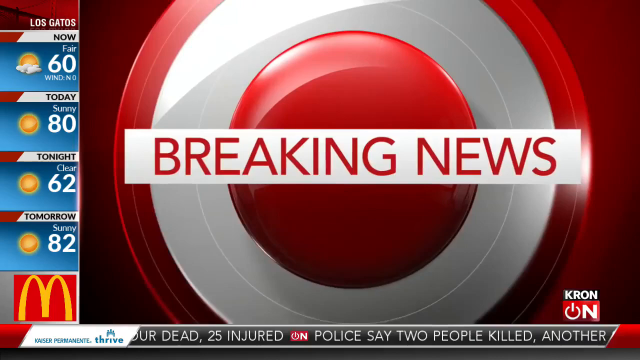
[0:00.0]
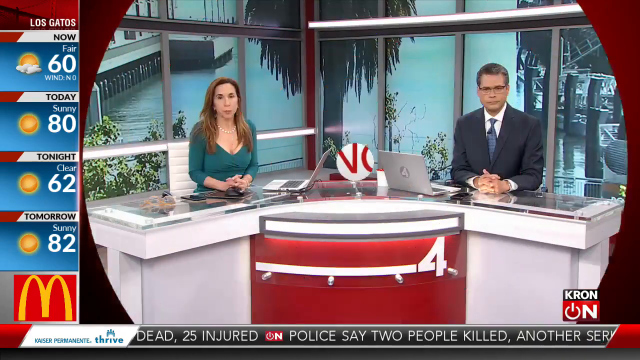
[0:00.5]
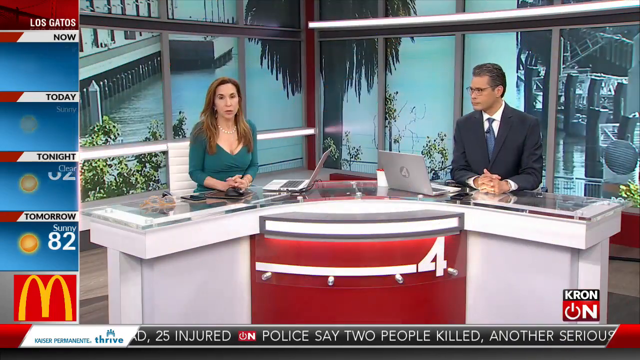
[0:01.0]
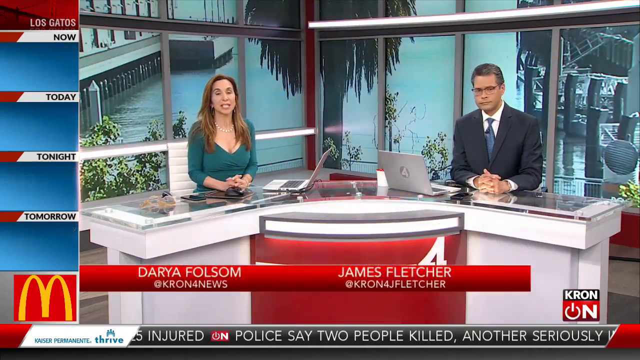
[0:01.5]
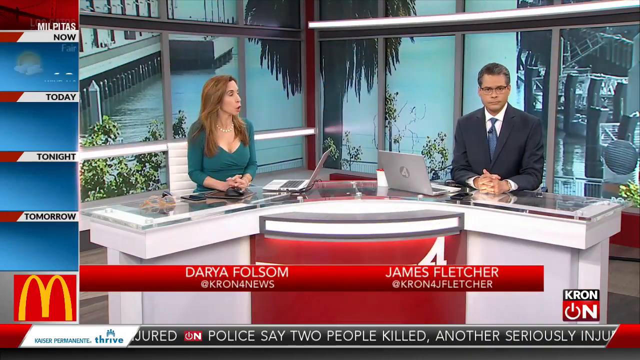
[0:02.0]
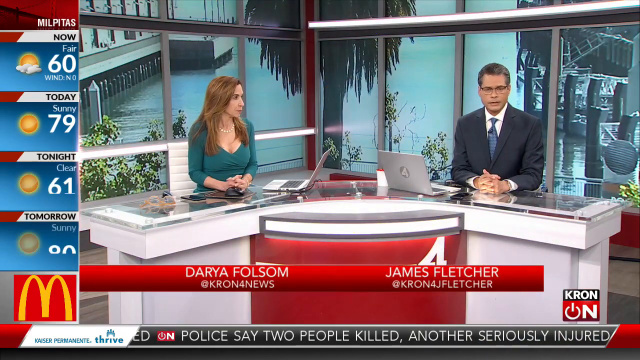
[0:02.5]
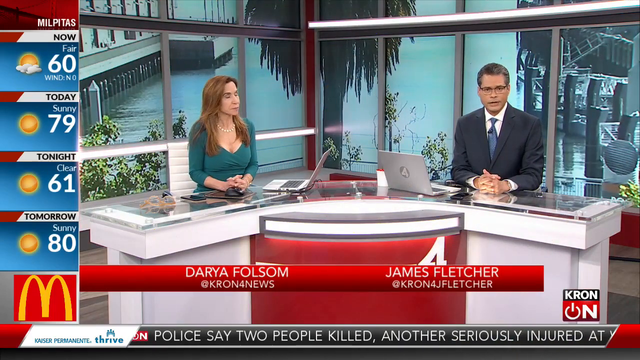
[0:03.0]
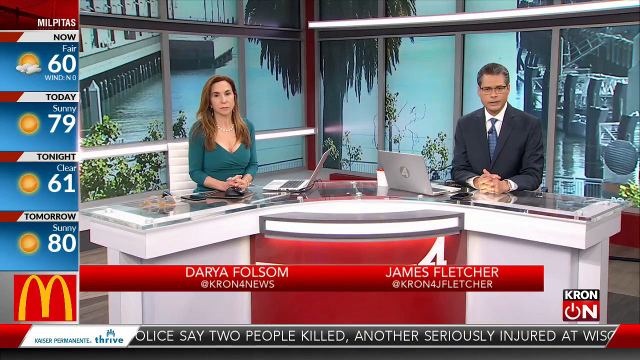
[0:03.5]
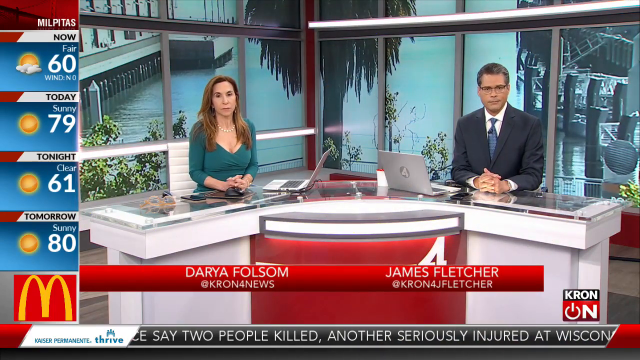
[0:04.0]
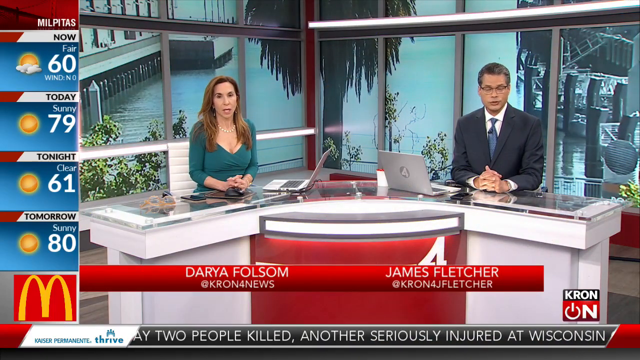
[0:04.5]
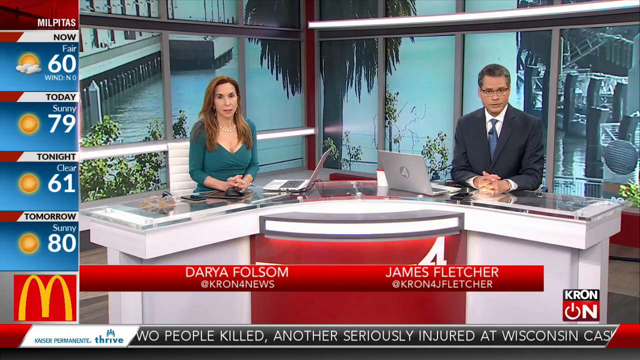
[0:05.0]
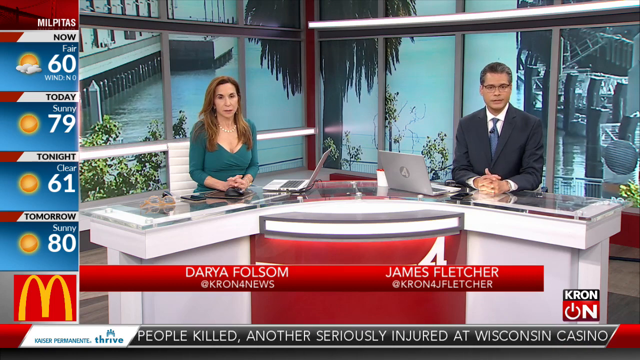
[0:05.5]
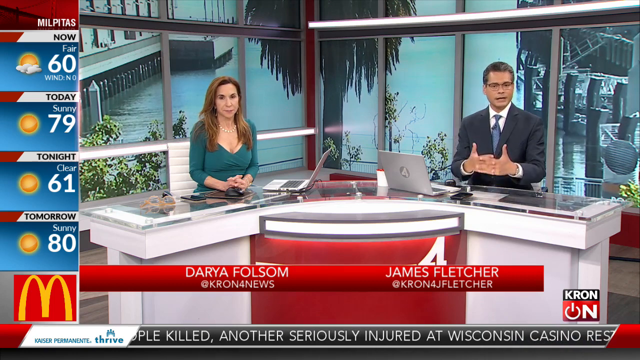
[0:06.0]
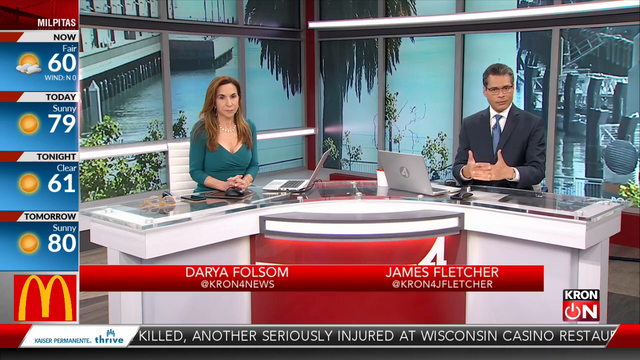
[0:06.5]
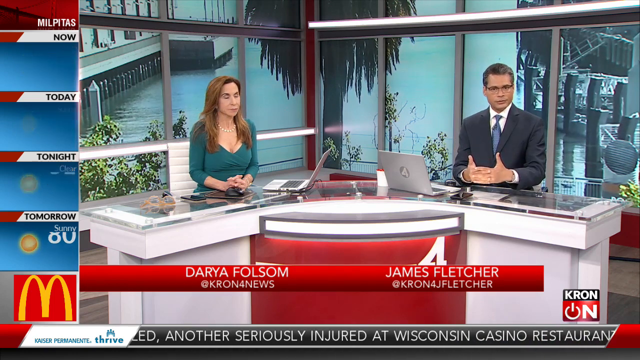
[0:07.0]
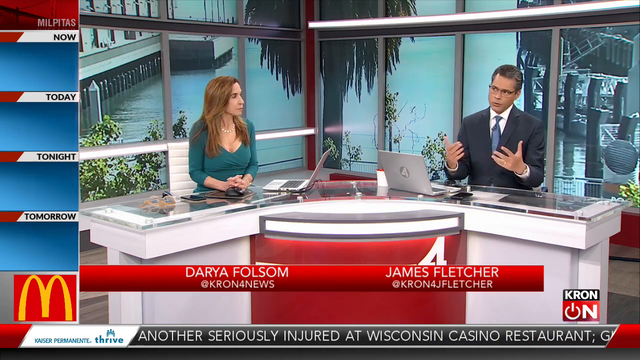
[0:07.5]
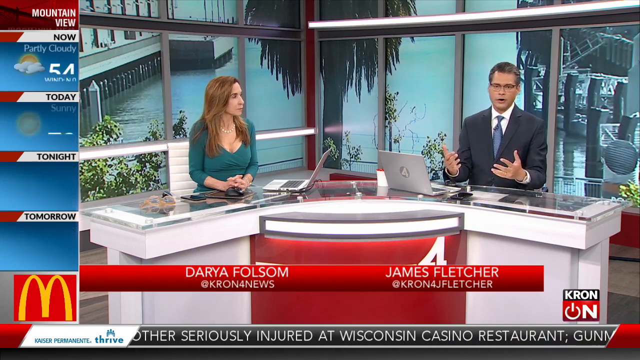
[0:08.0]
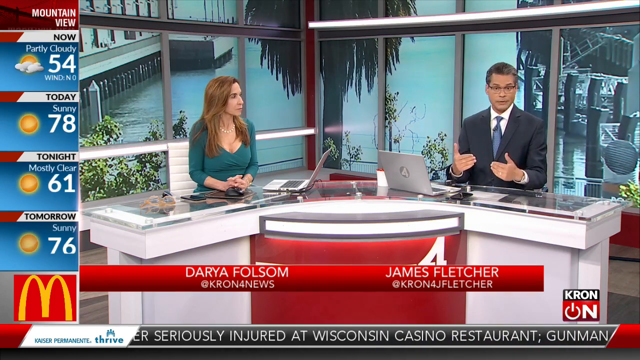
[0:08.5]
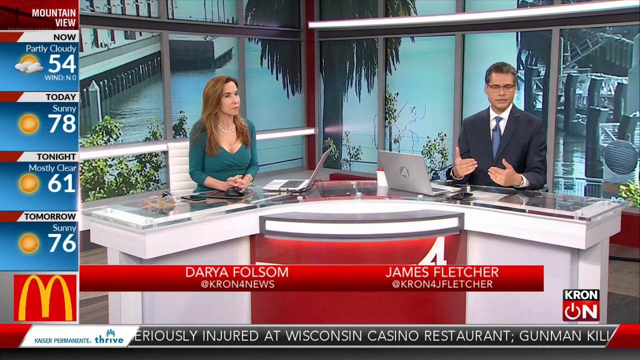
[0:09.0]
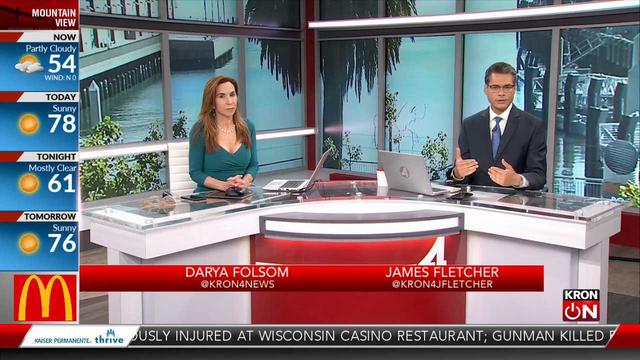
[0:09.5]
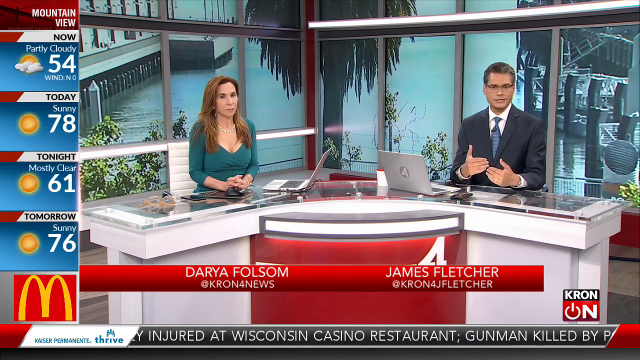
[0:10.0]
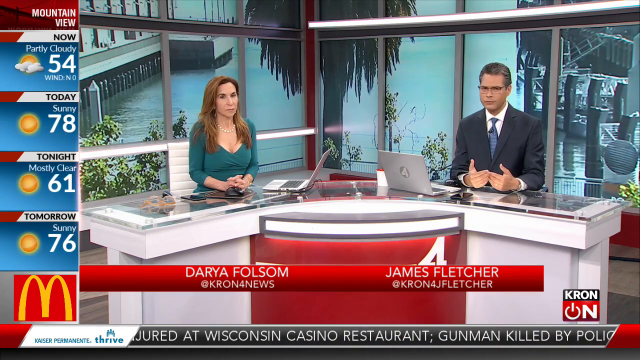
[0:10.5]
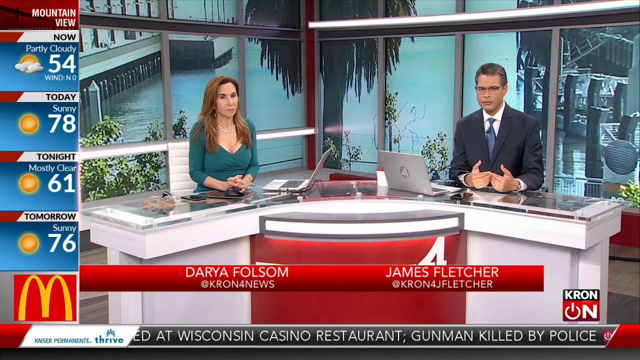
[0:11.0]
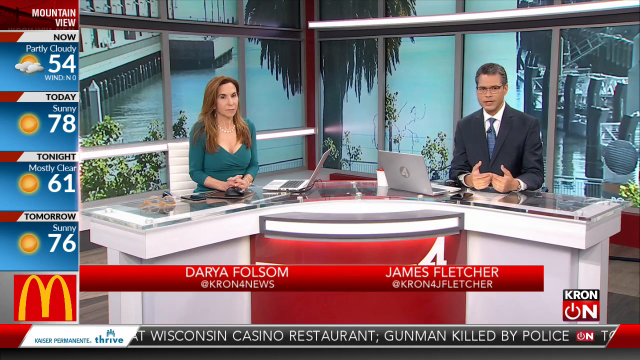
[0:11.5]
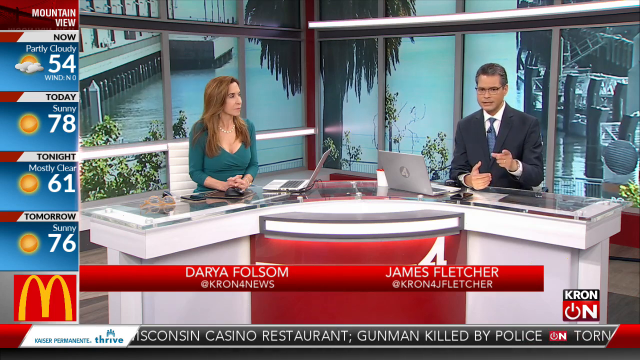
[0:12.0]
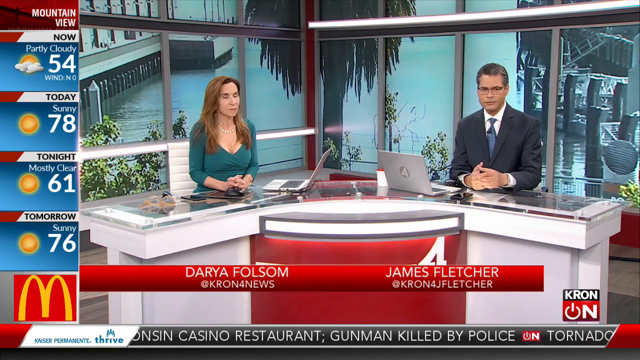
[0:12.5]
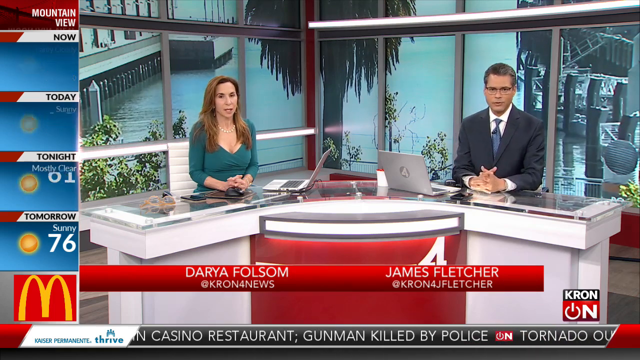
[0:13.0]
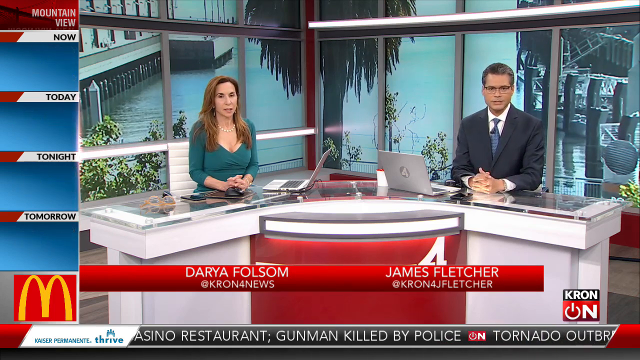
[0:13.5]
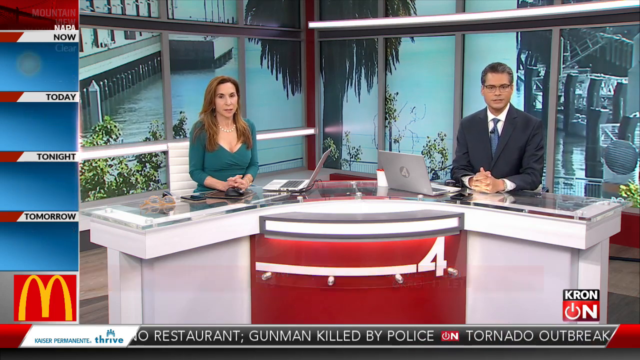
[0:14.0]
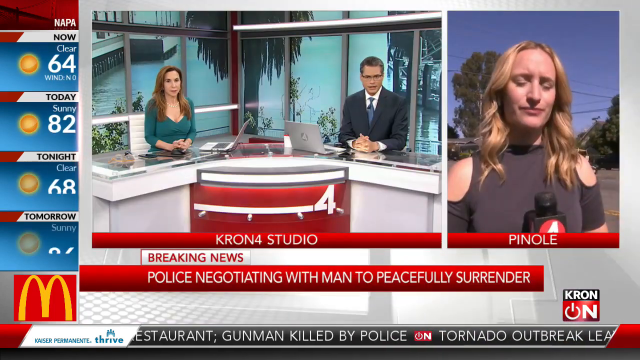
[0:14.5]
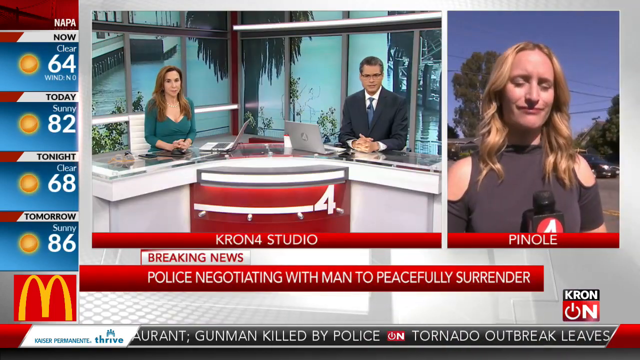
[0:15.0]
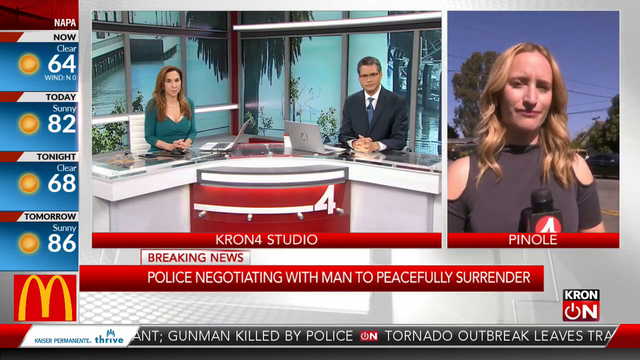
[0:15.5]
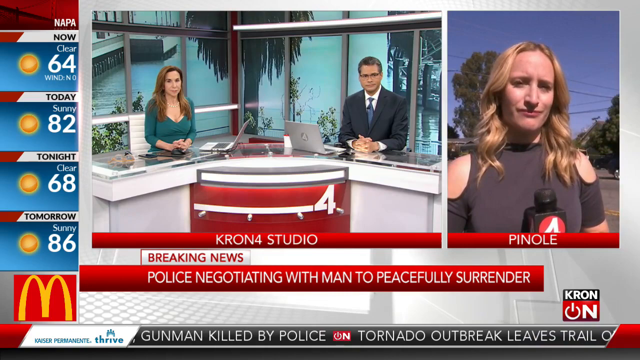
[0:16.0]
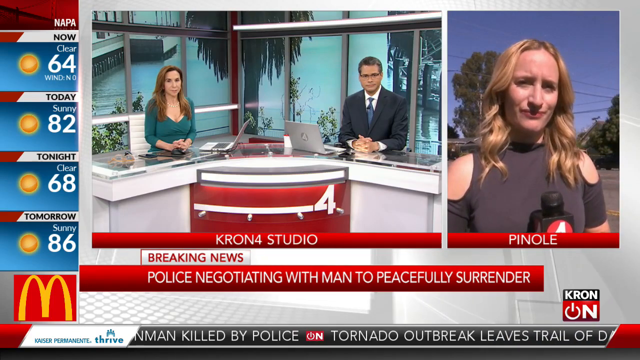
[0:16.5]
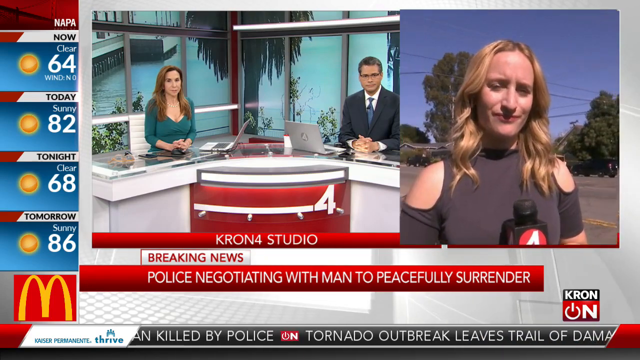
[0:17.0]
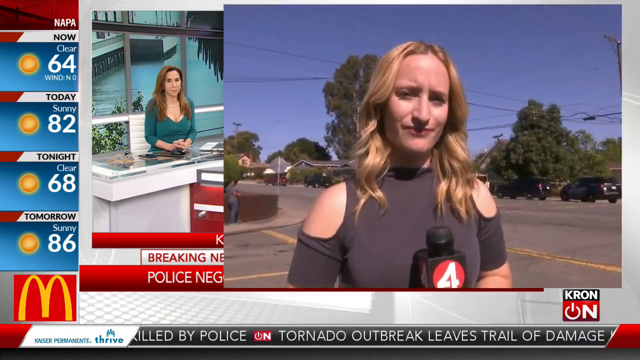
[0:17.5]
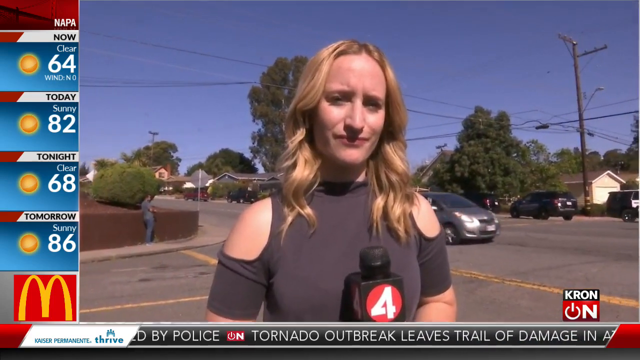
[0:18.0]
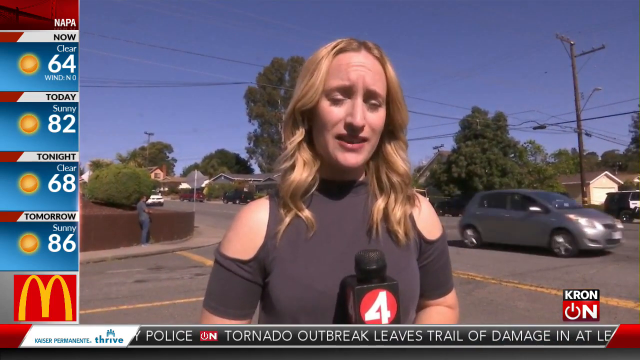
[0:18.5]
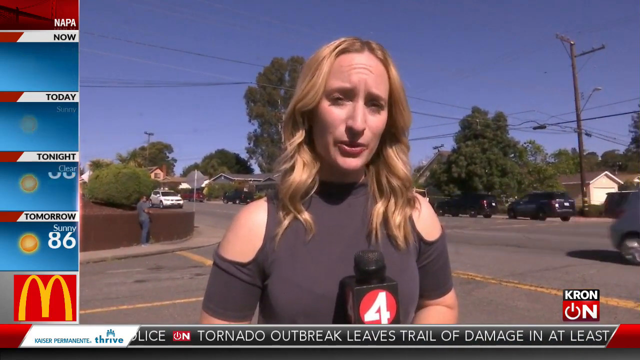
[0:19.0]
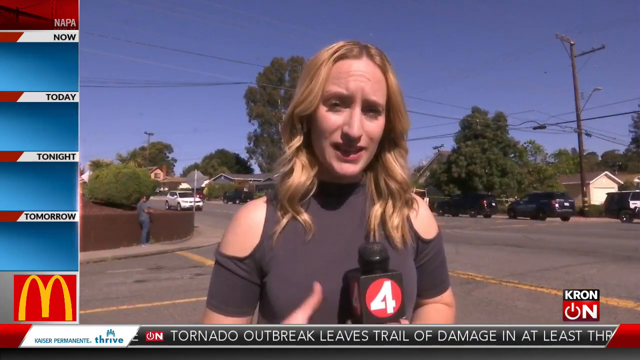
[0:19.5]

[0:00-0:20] A breaking news screen appears, and on the left side of the image there is a column with weather information for Los Gatos, covering now, today, tonight and tomorrow, with an ad for McDonald's at the bottom of the column. The breaking news screen fades, and two reporters, a woman and a man, appear, with their names on a red bar at the bottom of the image: Daria Folsom on the left, and James Fletcher. Both are seated at an L-shaped desk with an arch and a rounded red front bearing the number 4. Daria wears a blue dress and has longer light brown hair. James wears a dark blue suit, a tie and a white shirt. Daria starts talking while looking at James, and then James talks, looking at the camera, his hands raised as he gestures as if explaining something; he then points at the screen with his left hand. A field reporter appears on the right side of the image, dividing the screen with the two studio reporters and the weather column on the left. She is blonde, wears a grey dress, and listens to her colleagues. Her image then covers practically the whole screen except for the left column, and she starts talking.